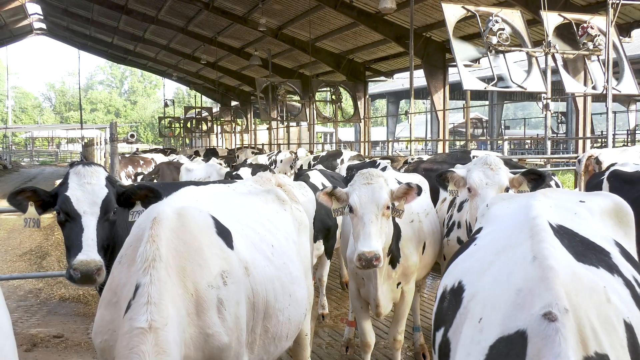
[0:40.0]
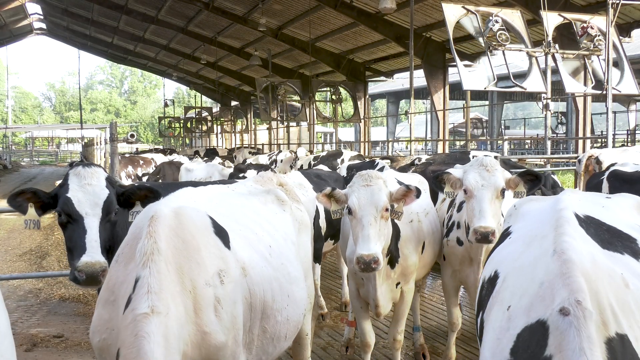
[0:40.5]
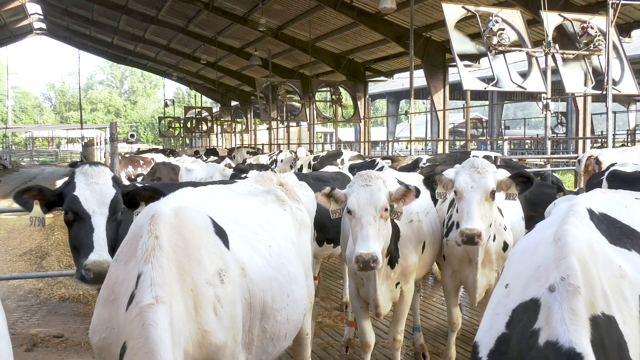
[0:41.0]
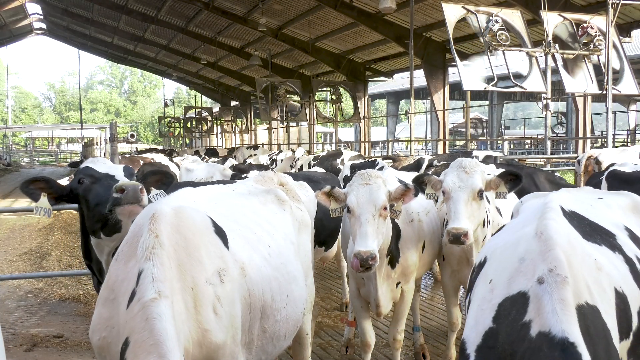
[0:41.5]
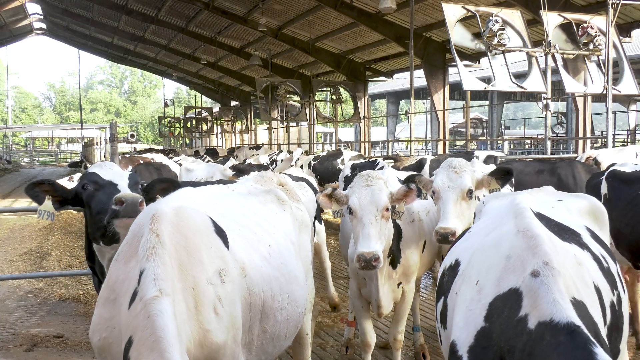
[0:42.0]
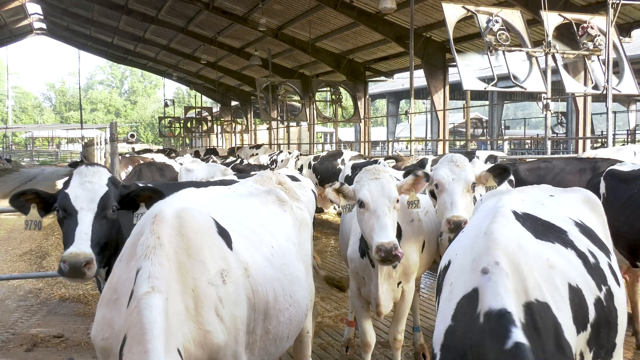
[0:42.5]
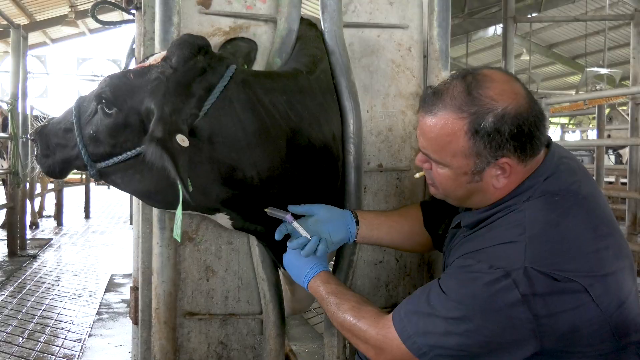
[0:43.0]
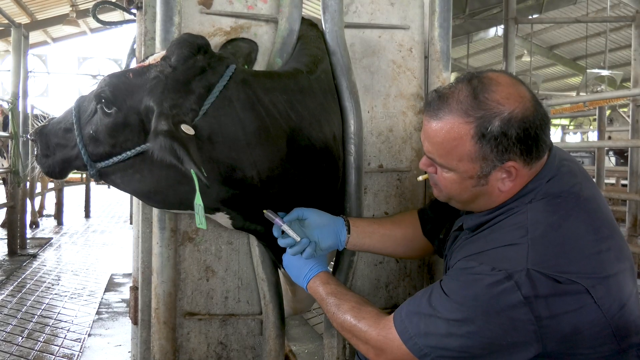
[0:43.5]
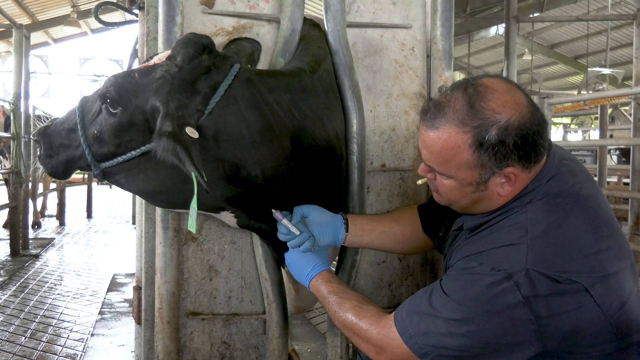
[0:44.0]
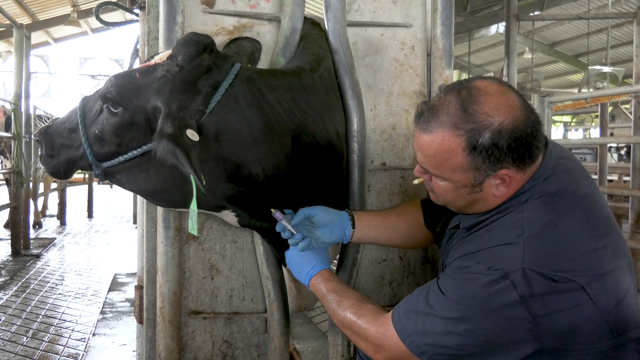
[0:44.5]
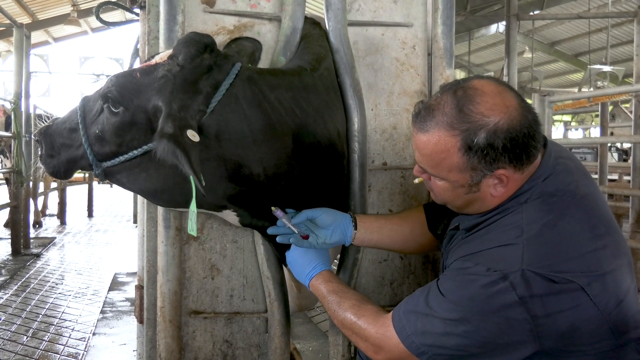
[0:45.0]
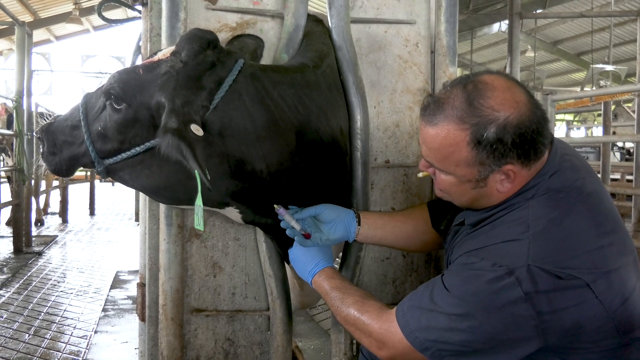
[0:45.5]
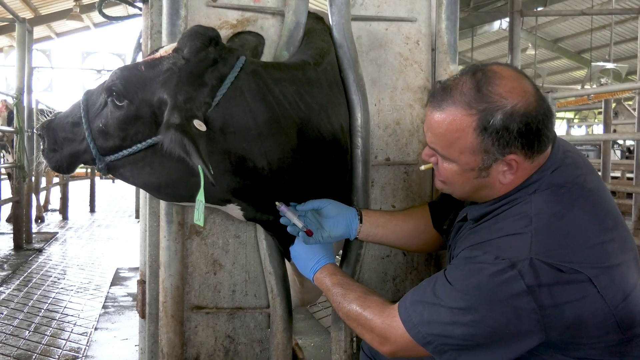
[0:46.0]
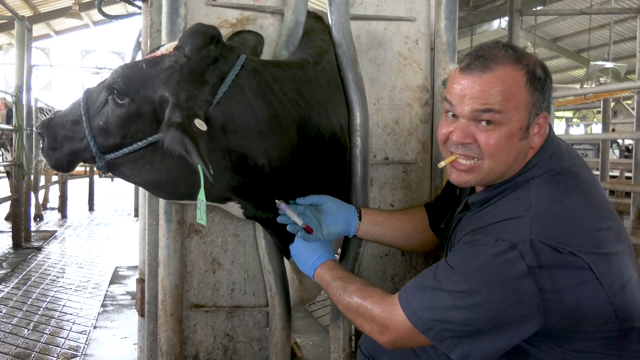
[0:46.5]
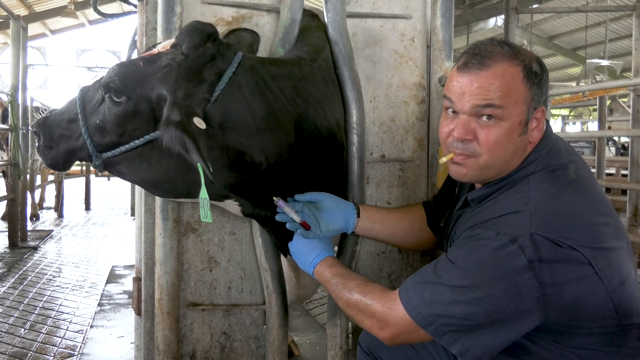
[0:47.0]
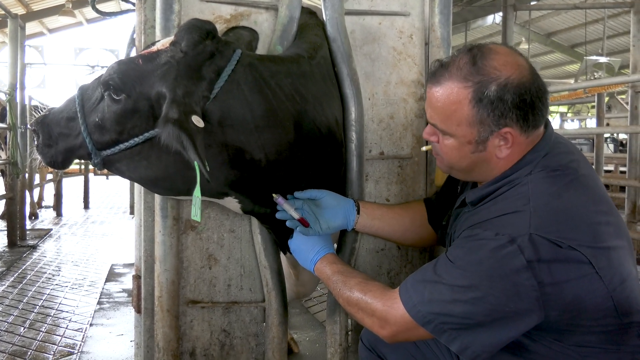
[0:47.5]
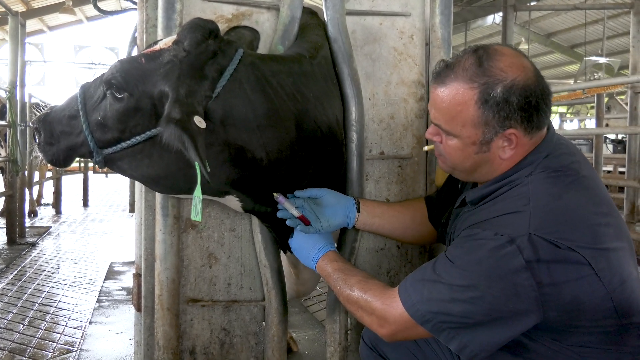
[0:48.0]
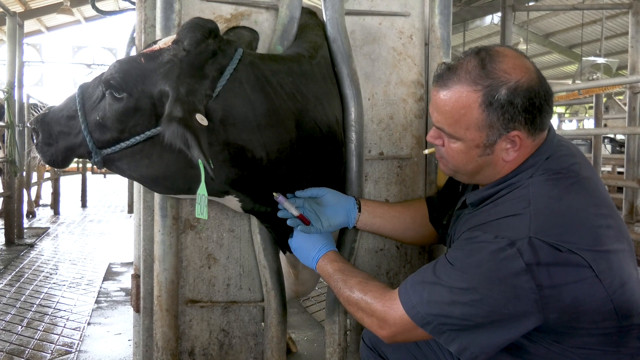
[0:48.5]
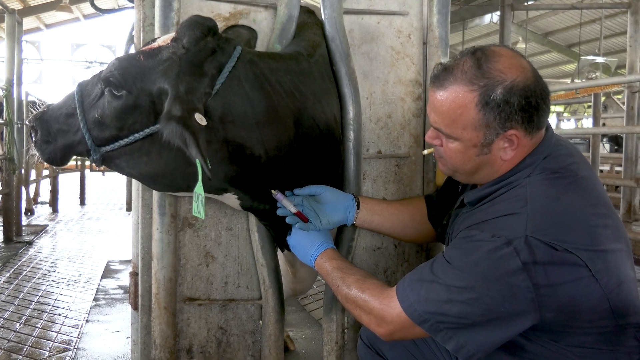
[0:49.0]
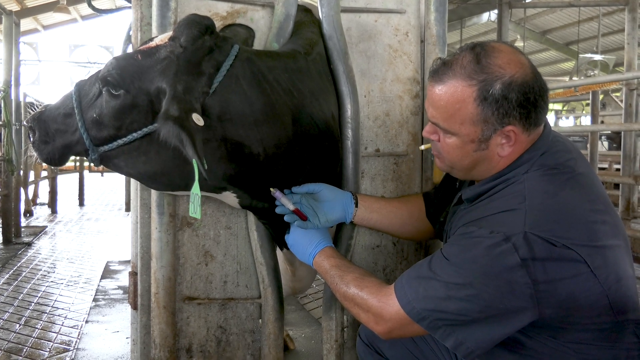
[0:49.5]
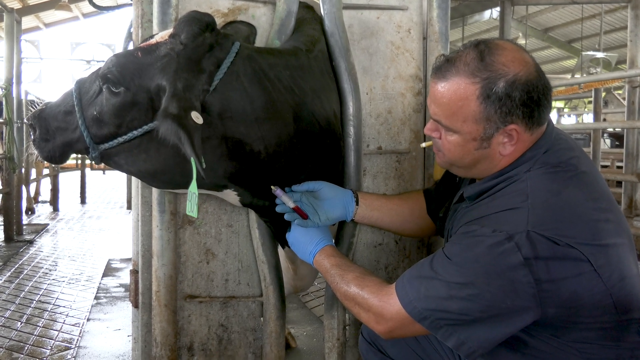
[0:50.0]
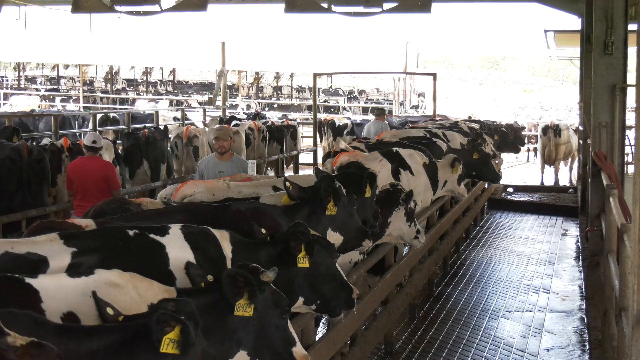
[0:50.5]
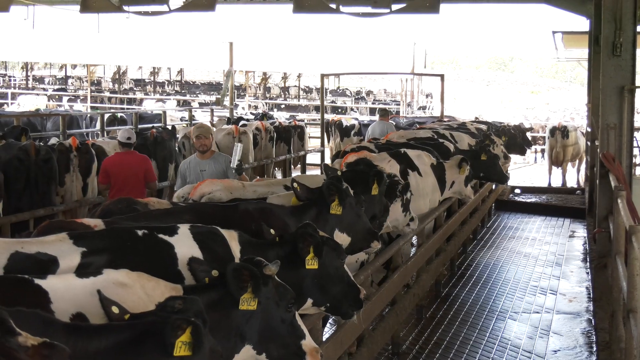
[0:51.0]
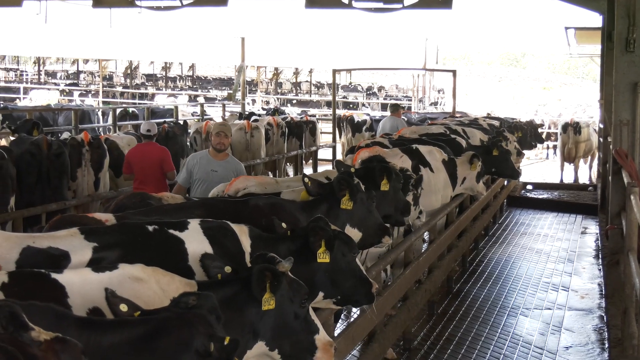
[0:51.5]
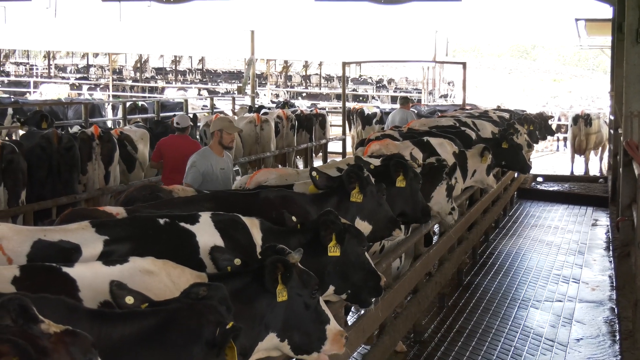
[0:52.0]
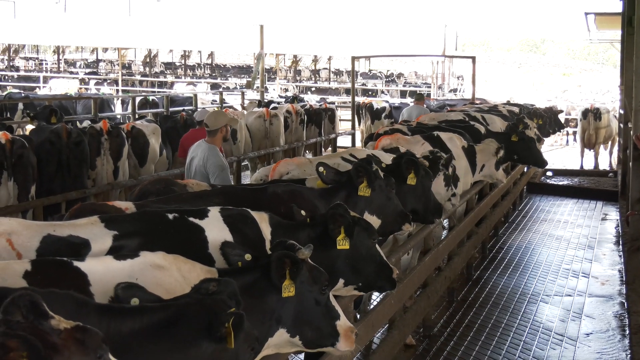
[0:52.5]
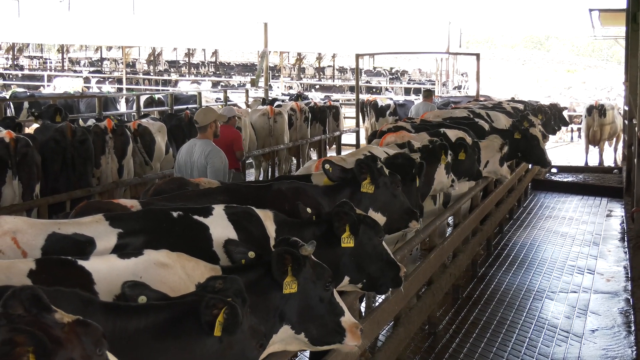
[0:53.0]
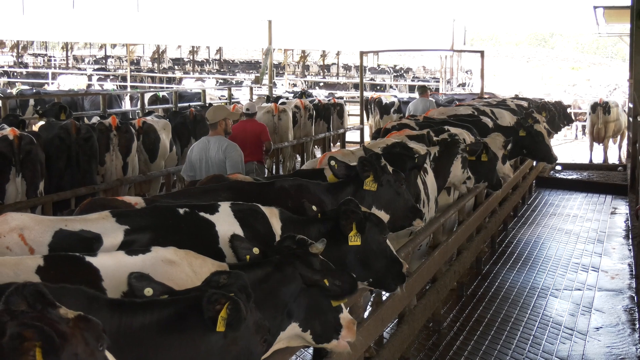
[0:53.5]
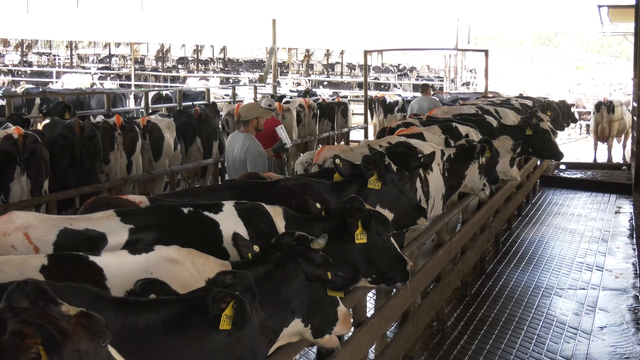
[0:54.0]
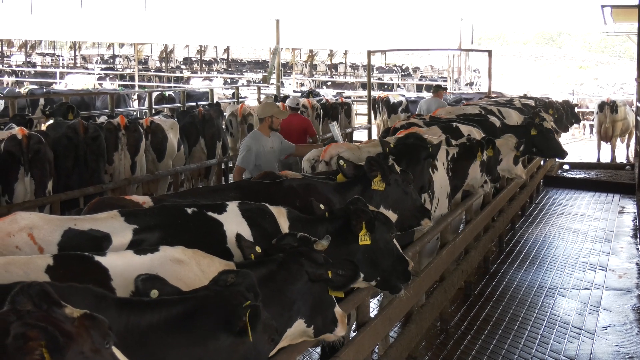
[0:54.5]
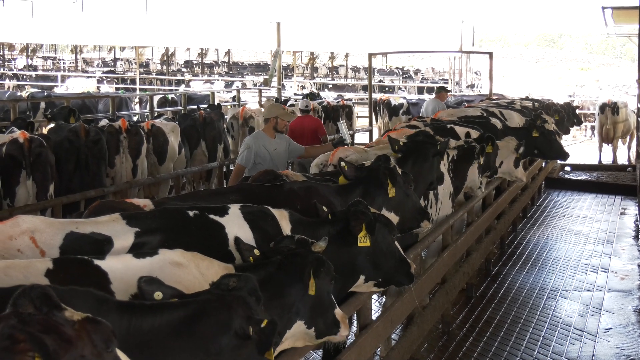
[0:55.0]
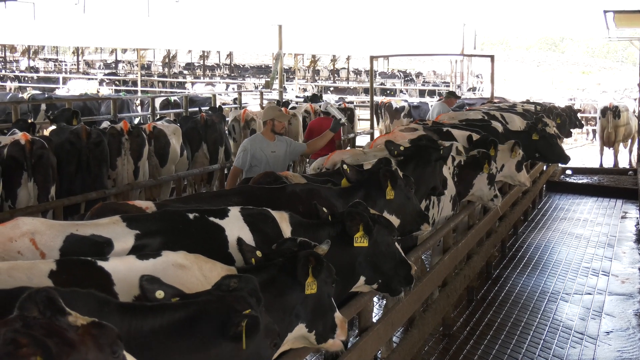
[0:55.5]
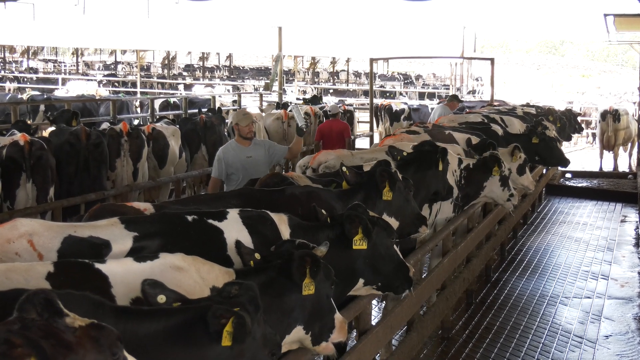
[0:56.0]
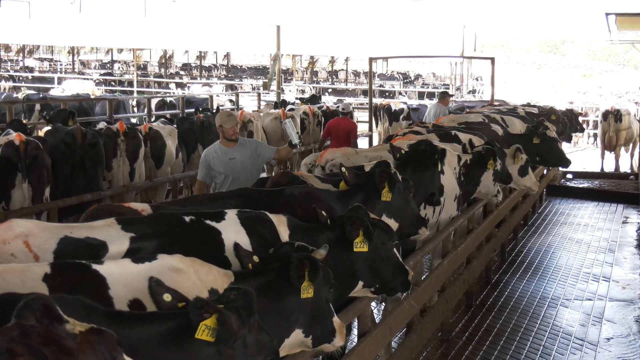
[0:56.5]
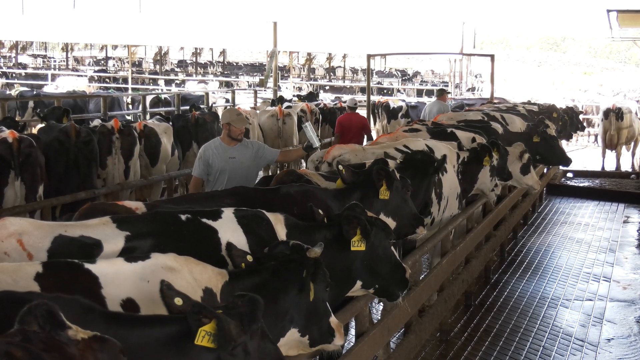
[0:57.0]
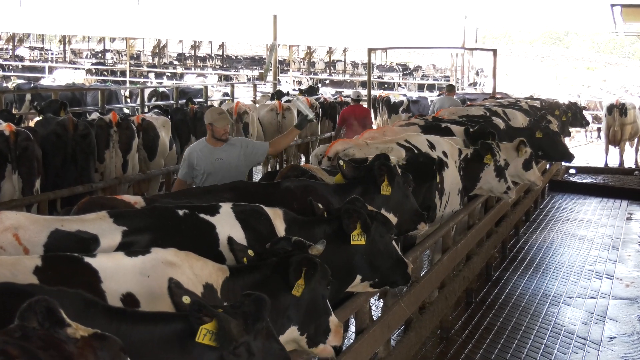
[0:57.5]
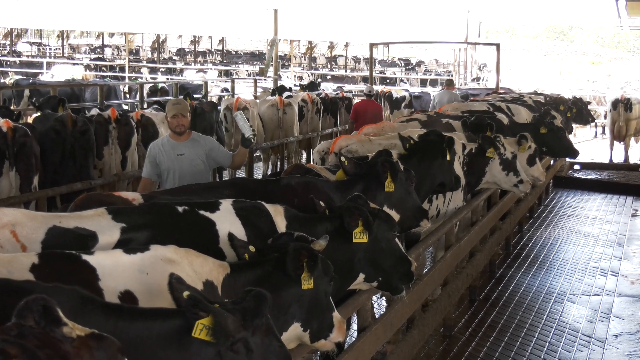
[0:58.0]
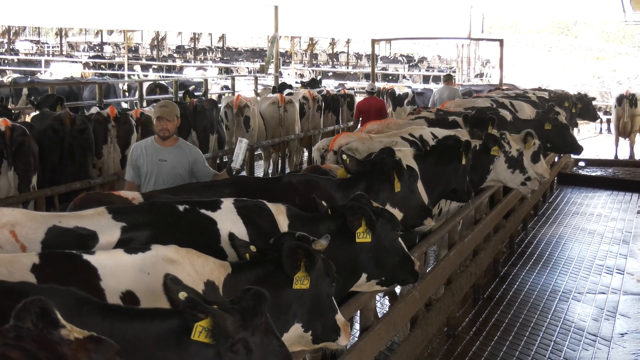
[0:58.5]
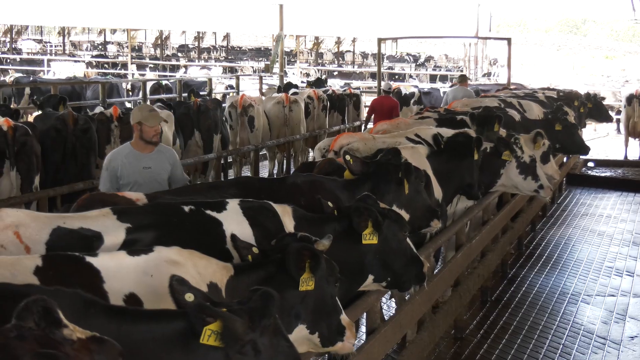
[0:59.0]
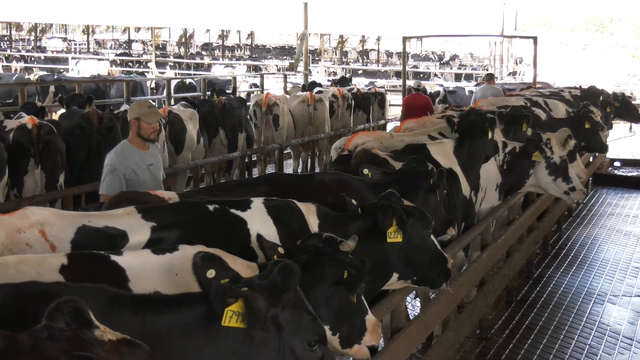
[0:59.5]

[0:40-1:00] Cows stand under big fans and move around somewhat. A farmer injects a needle into one of the cows. Ranchers move among the cows, putting something on them and marking them with some kind of red smoke or powder. The cows are in an open area, not caged, roaming around, and each has tags on its ears. The man giving the injections with a syringe is a little older and seems to have something in his mouth, possibly the cap of a needle. Some of the cows are painted red on their backs, apparently so they can be identified.